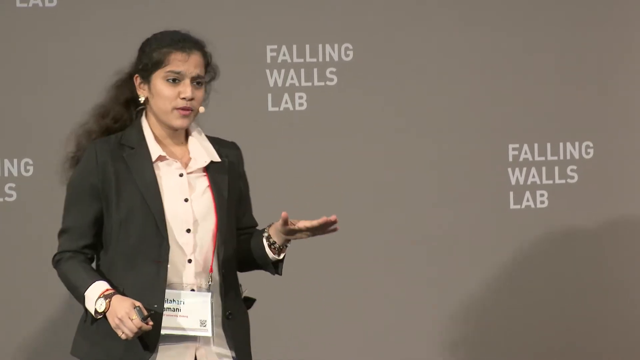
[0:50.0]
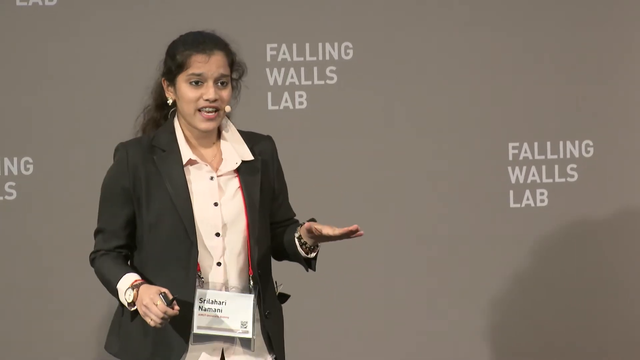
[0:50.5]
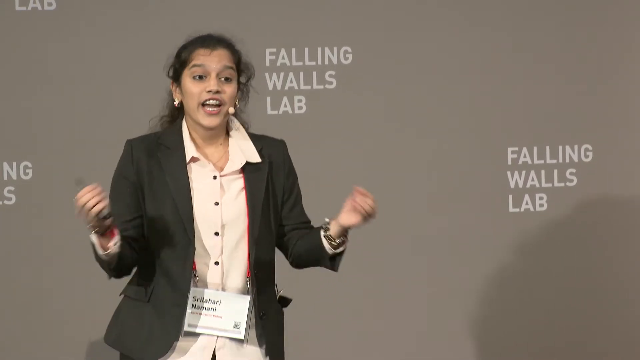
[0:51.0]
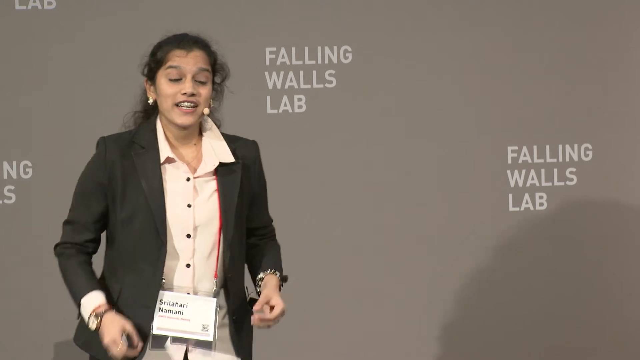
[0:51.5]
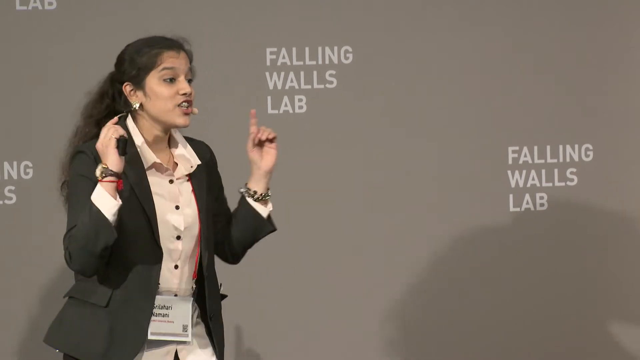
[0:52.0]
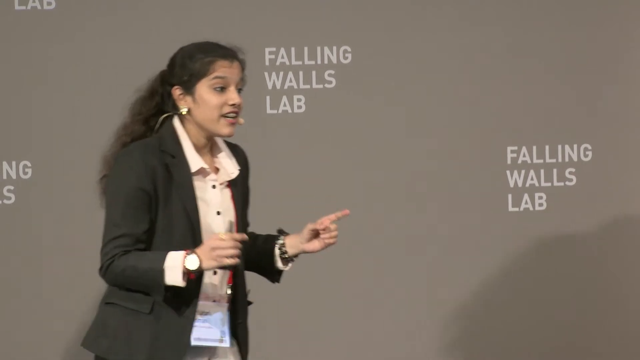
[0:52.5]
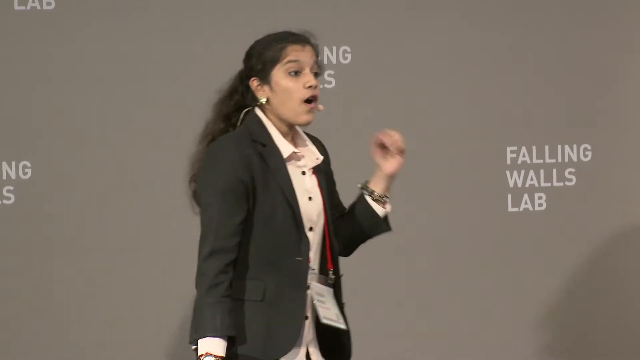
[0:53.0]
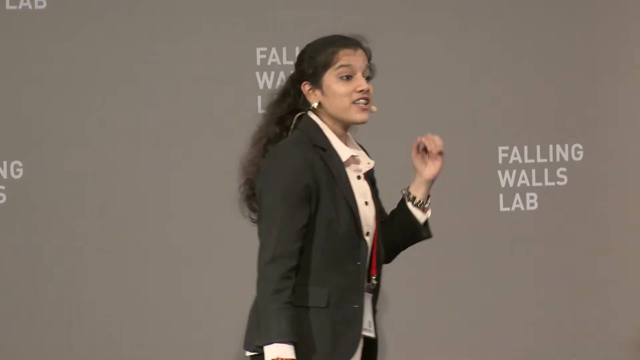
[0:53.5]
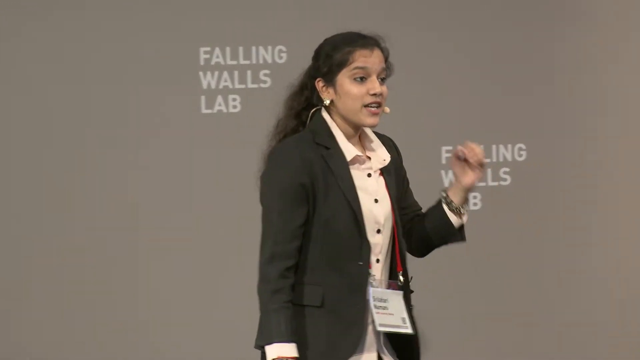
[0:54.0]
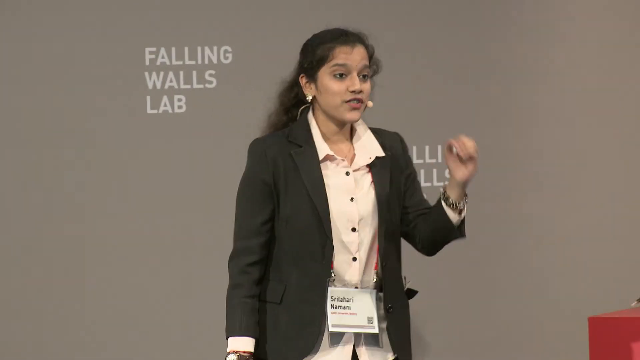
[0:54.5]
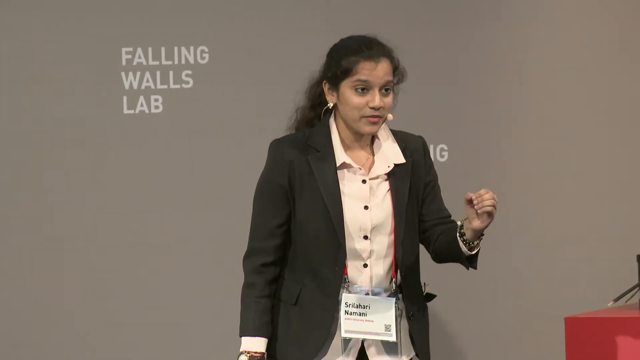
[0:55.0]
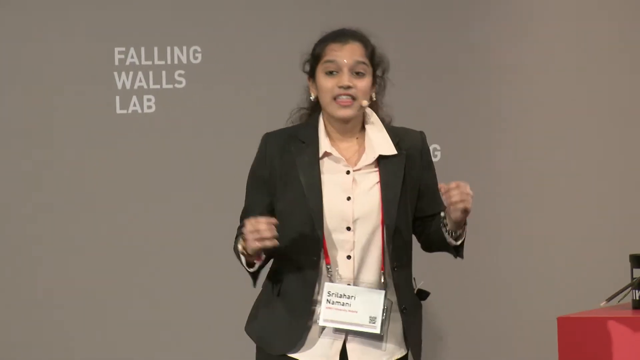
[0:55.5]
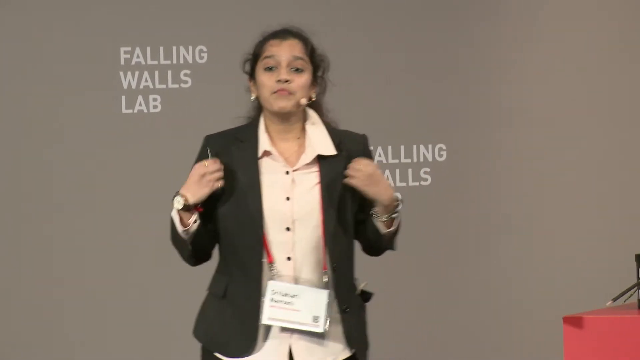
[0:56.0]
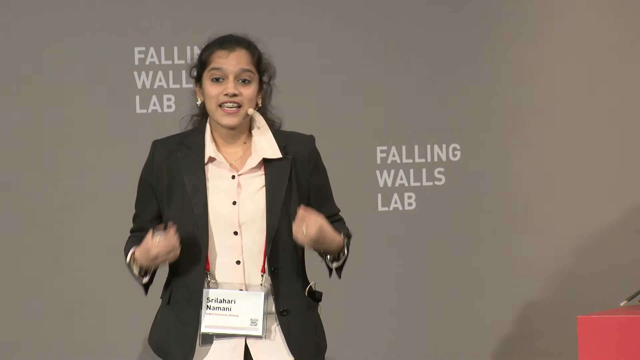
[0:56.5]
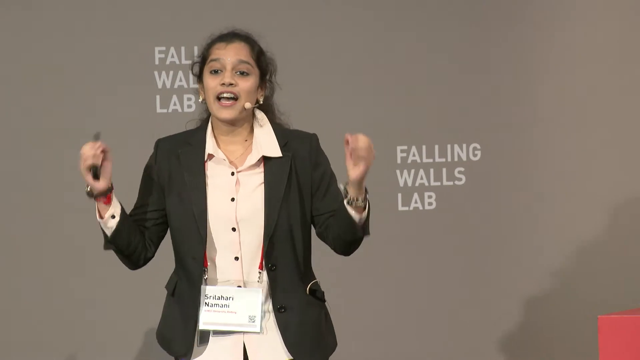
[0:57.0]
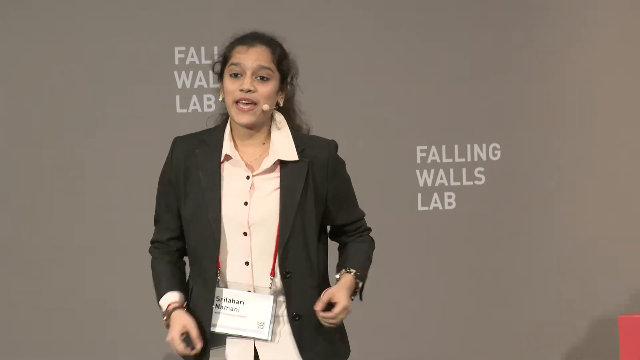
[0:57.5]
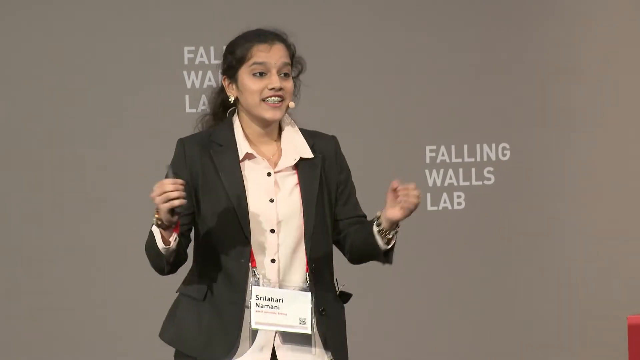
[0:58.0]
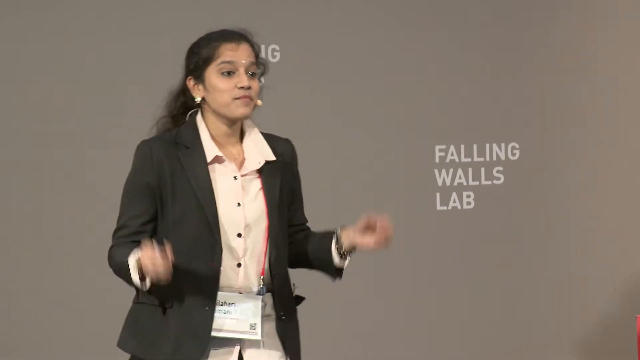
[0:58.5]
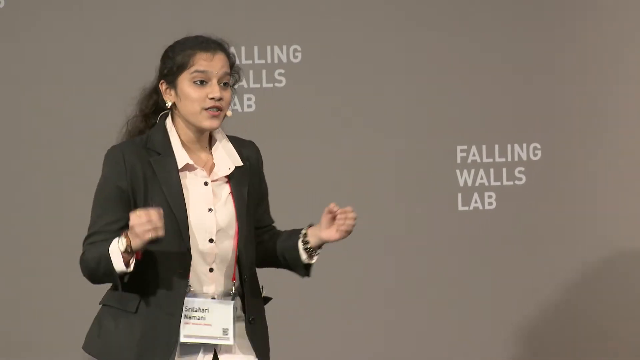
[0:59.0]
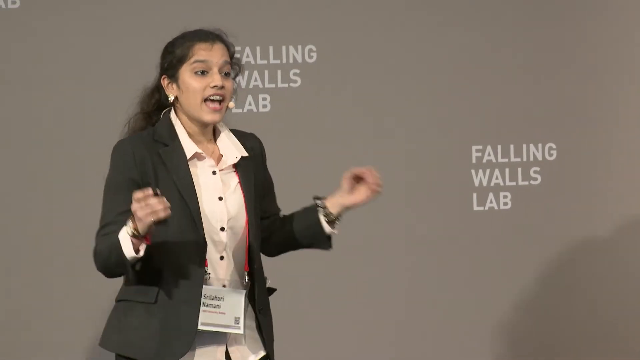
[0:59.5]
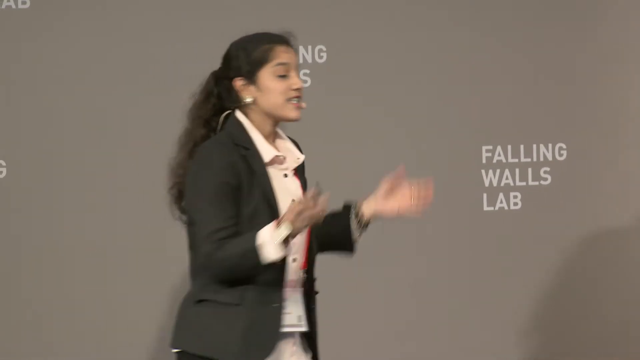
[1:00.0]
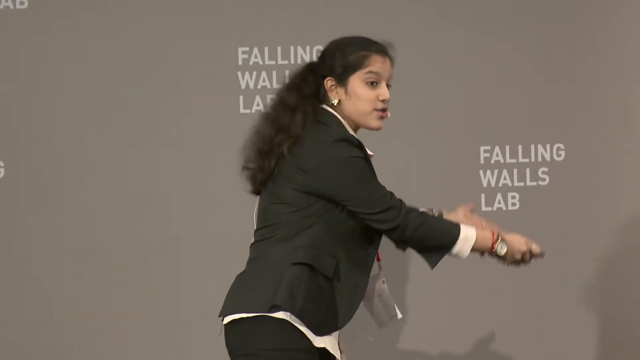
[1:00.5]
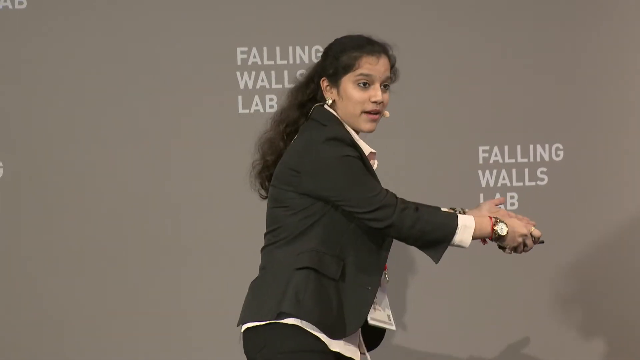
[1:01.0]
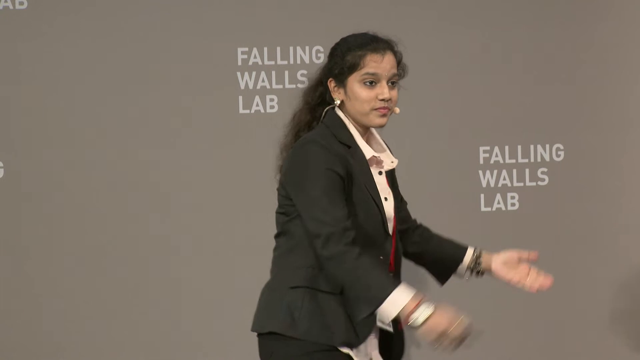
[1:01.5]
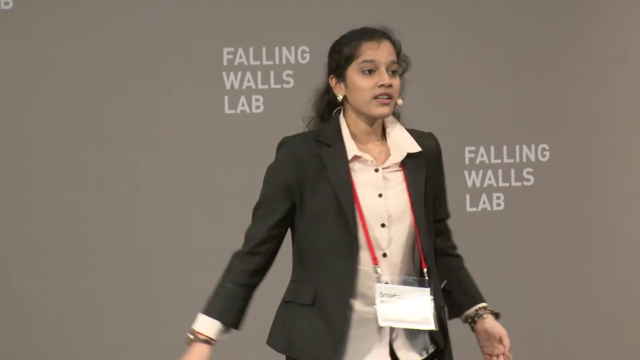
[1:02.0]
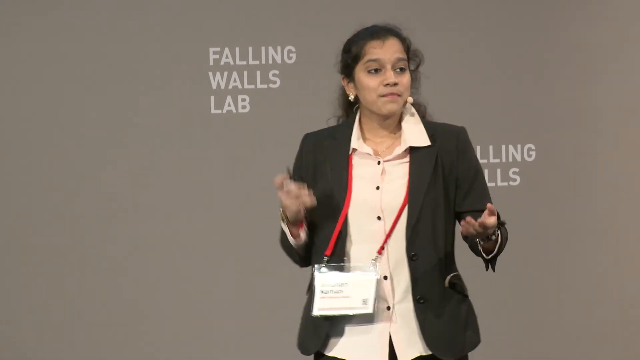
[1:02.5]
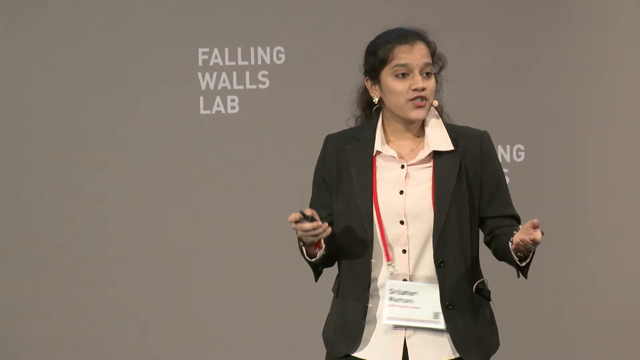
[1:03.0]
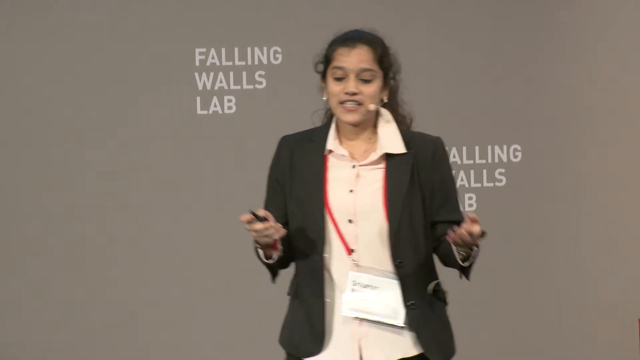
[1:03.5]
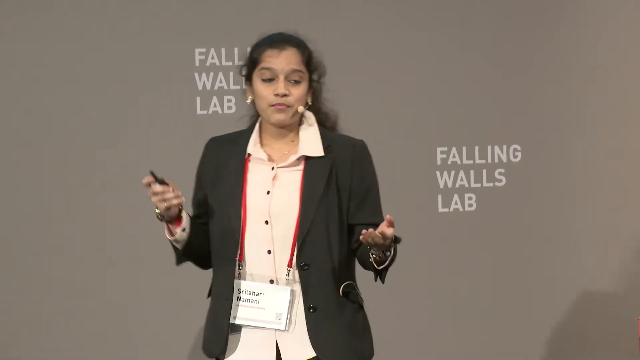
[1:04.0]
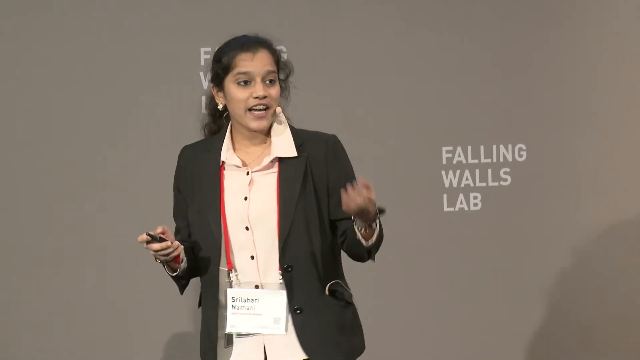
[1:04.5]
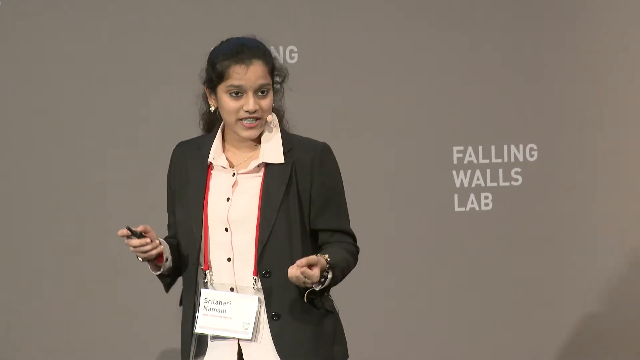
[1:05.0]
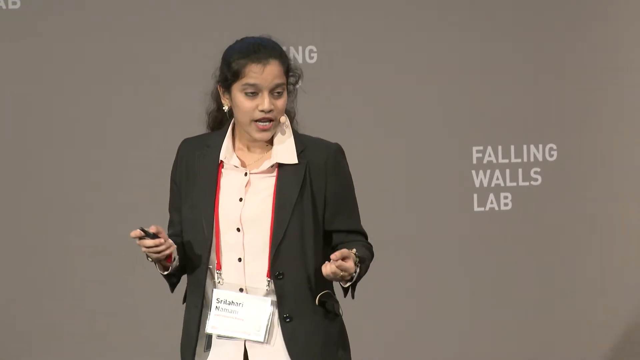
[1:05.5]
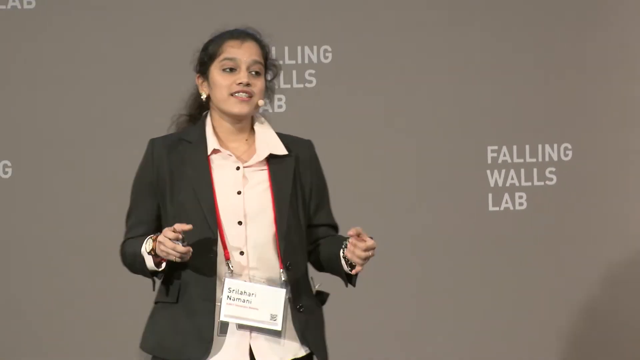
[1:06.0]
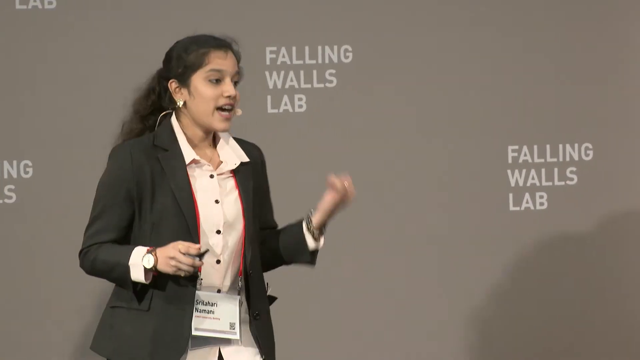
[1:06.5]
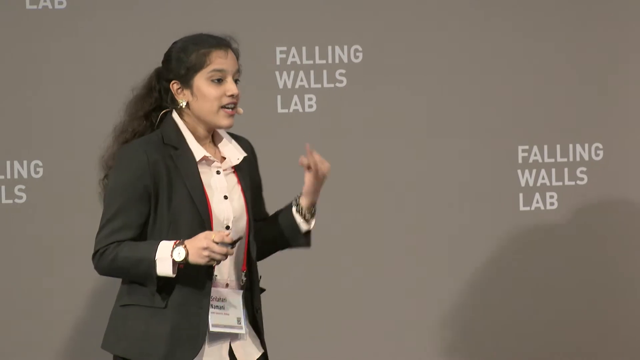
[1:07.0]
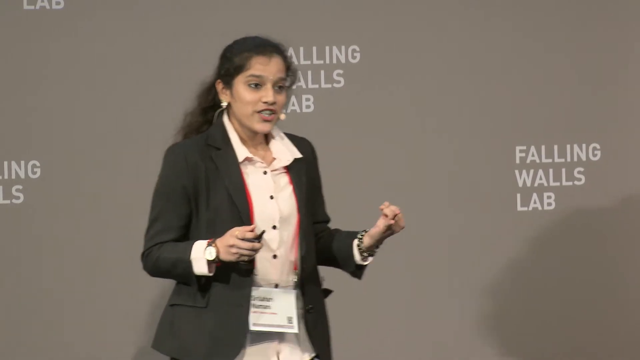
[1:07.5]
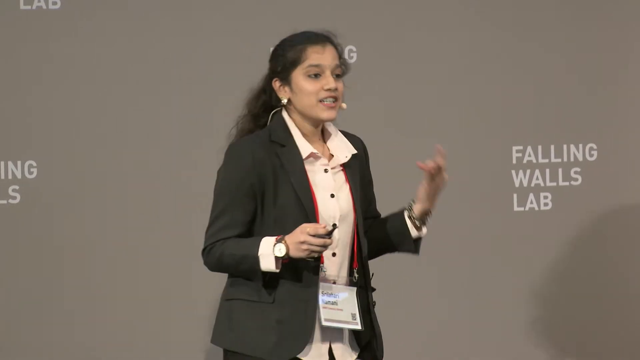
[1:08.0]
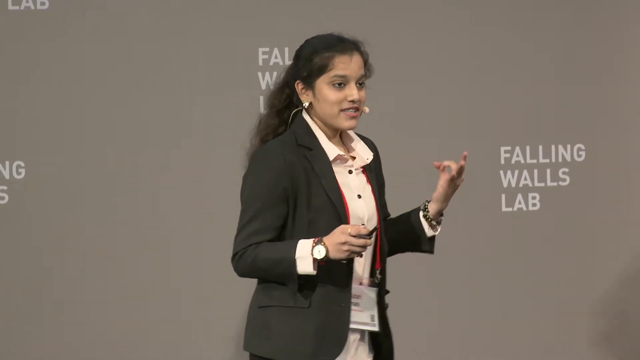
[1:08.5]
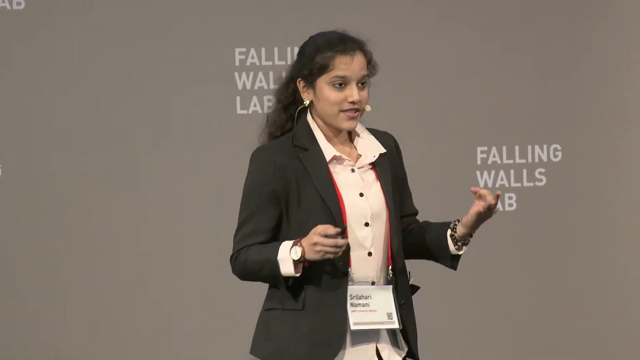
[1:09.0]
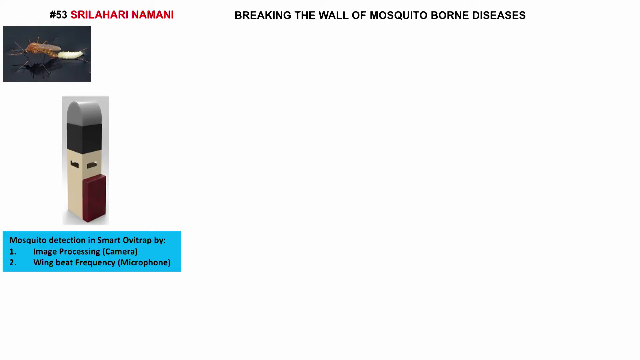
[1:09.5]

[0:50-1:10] The video cuts away from her presentation and back to her, zooming in on her upper body. She wears a bangle on her left wrist, and on her right wrist a watch with a tan leather strap and a very large round analog face. She gestures with her left hand and then with both hands, while still holding something in her right hand that might be a clicker for the slideshow. As she gestures, the lanyard around her neck swings and the name tag swings with it. Later the video cuts to the presentation, which still reads "#53", "Sri Lahari Namani" and "breaking the wall of mosquito borne diseases".